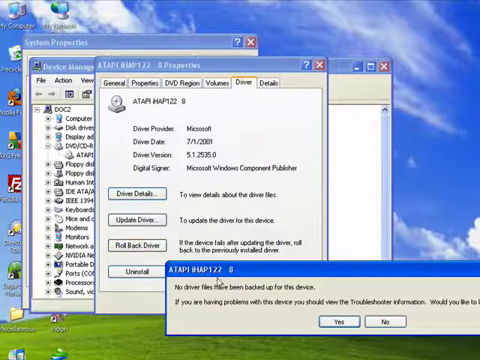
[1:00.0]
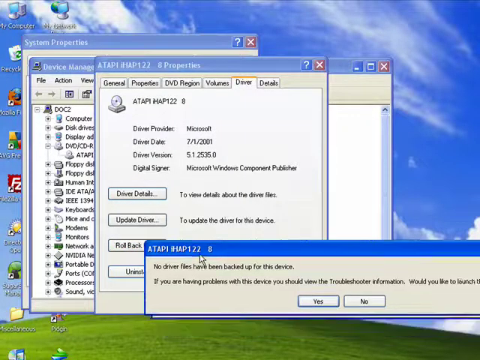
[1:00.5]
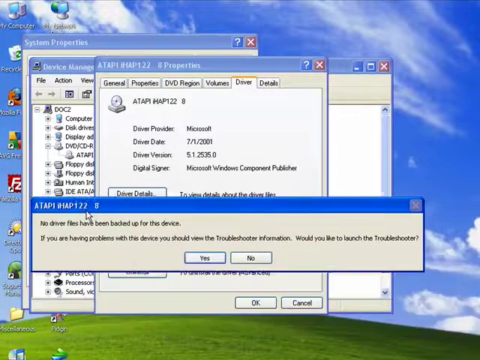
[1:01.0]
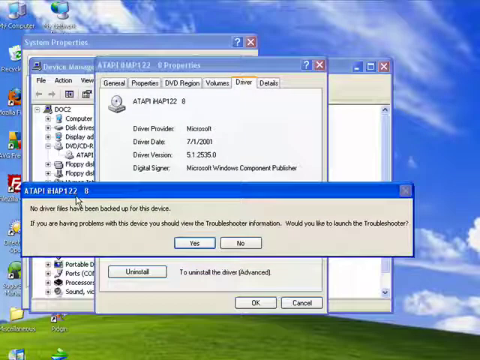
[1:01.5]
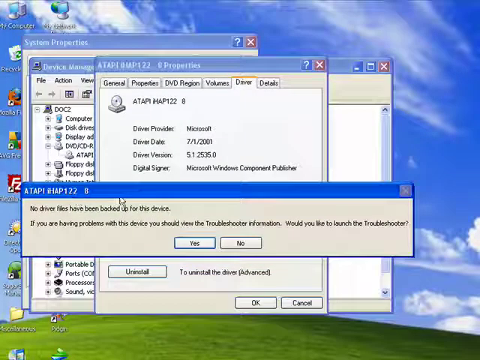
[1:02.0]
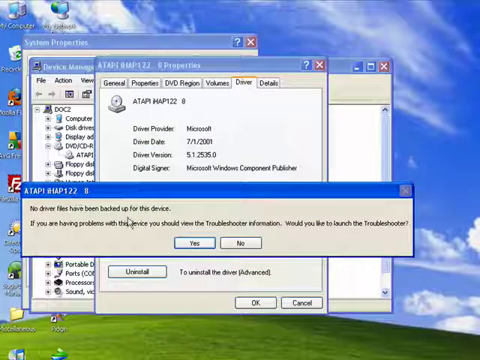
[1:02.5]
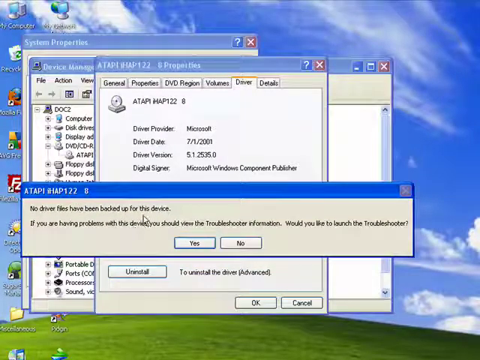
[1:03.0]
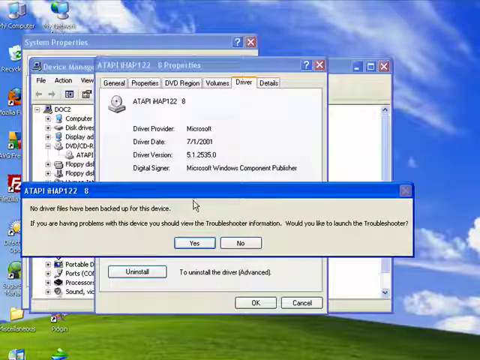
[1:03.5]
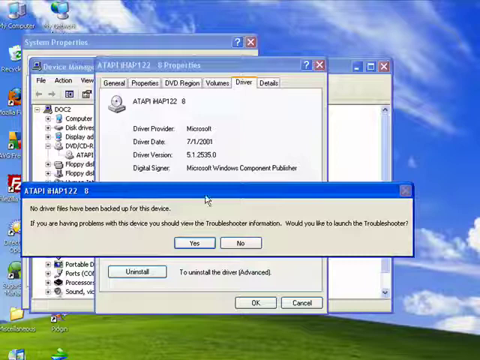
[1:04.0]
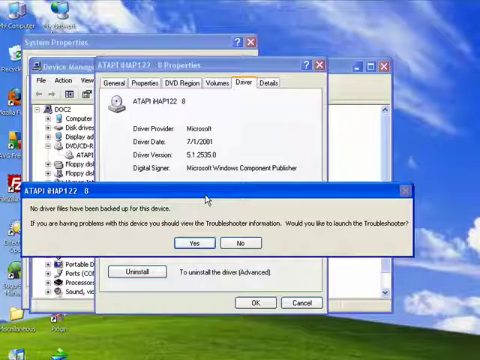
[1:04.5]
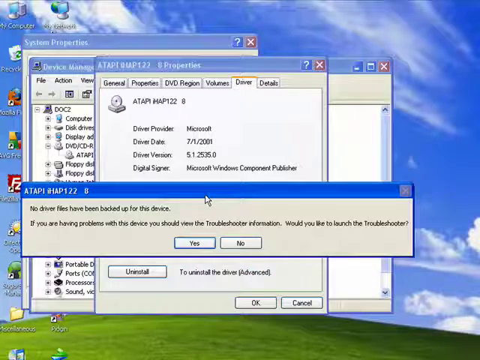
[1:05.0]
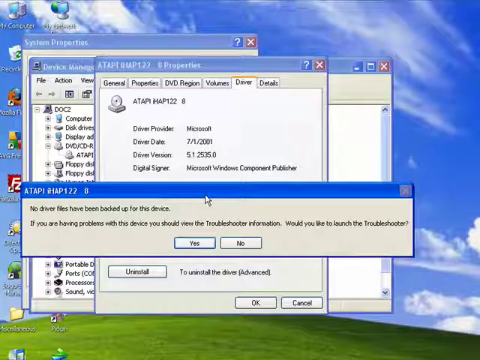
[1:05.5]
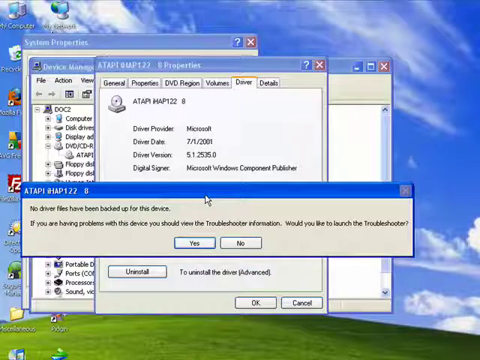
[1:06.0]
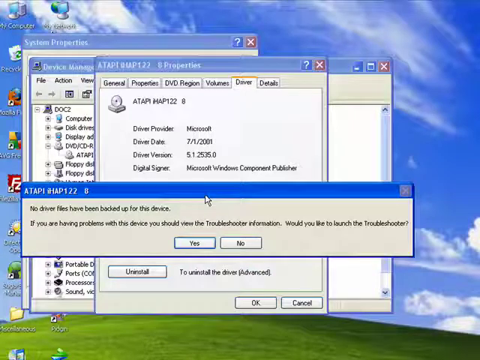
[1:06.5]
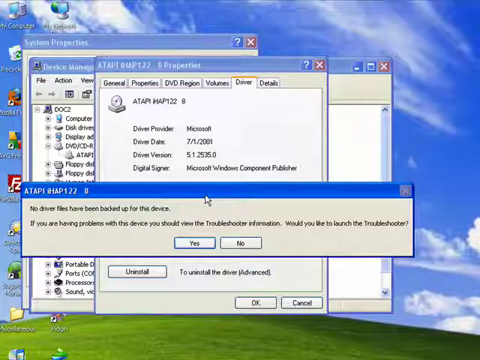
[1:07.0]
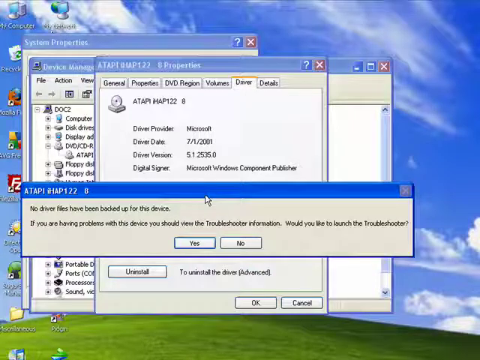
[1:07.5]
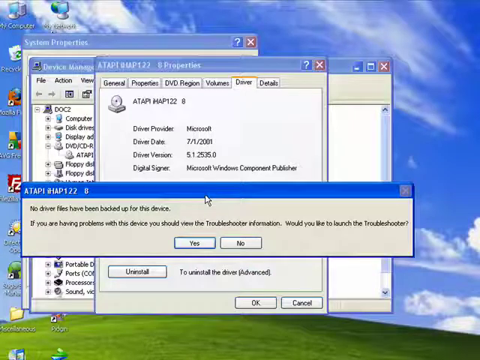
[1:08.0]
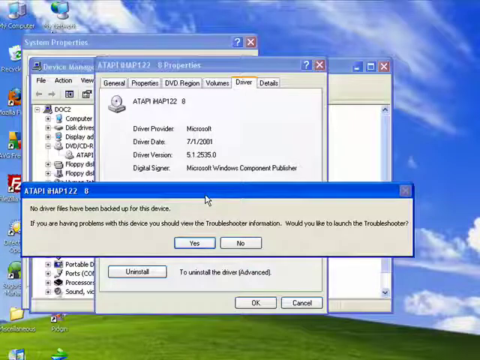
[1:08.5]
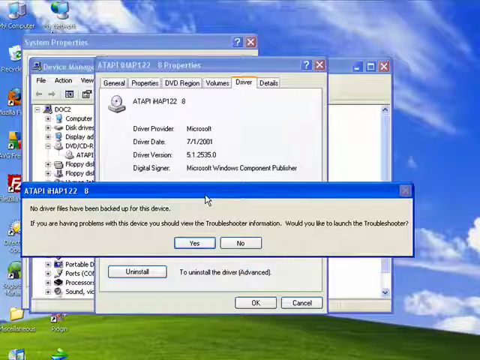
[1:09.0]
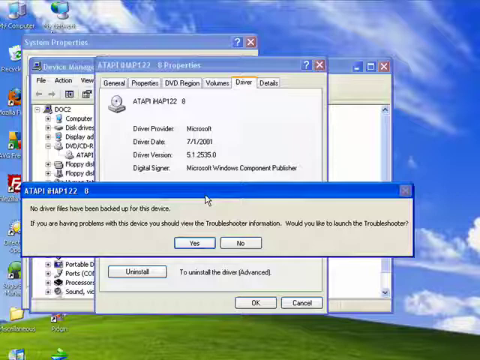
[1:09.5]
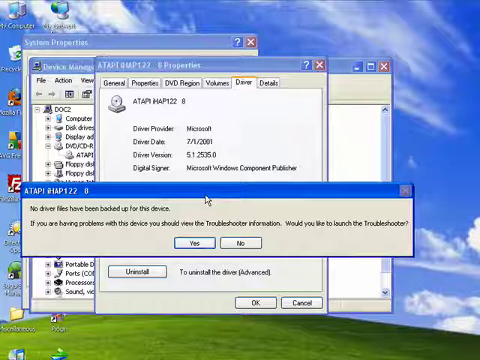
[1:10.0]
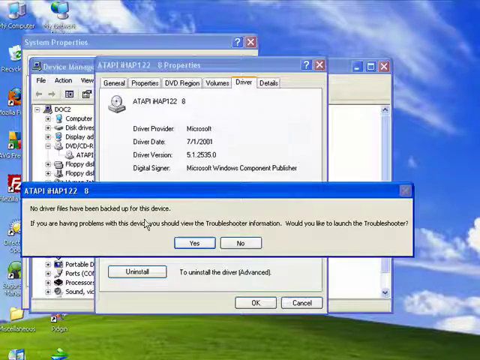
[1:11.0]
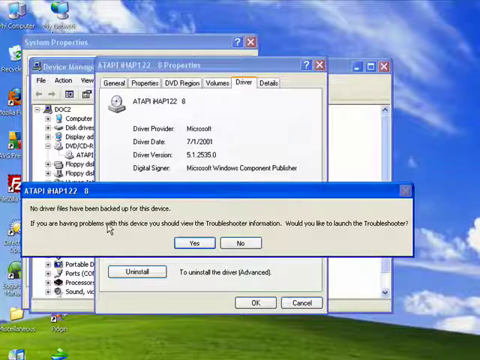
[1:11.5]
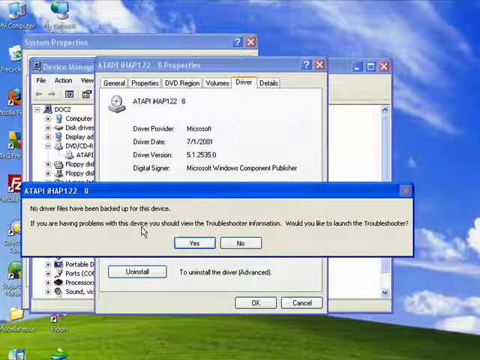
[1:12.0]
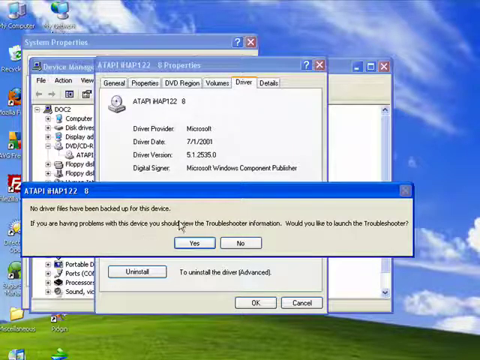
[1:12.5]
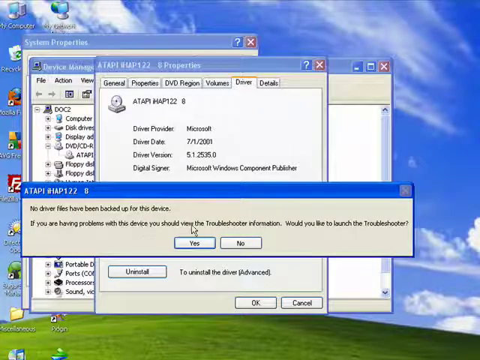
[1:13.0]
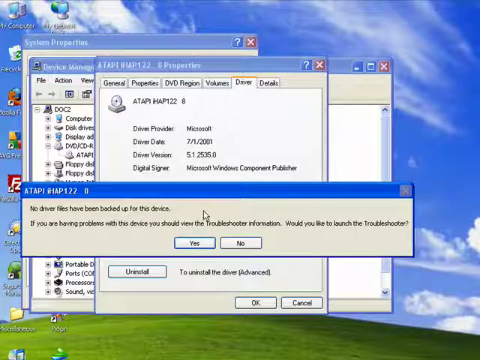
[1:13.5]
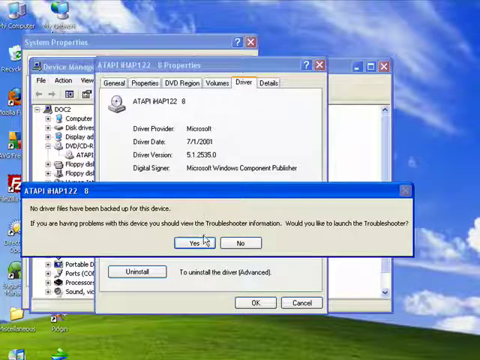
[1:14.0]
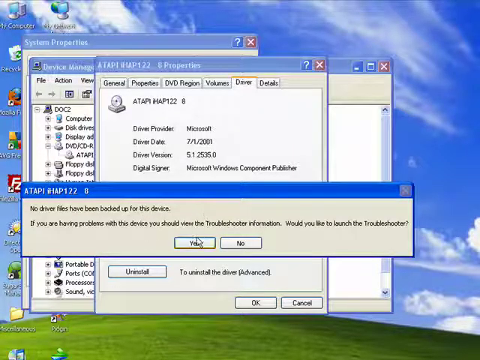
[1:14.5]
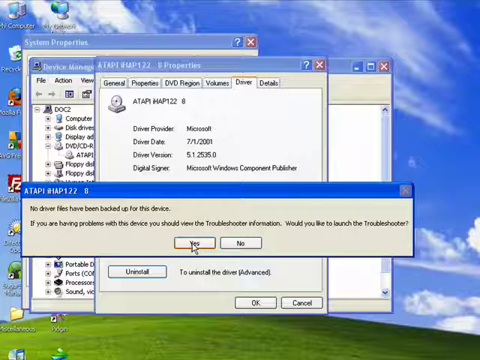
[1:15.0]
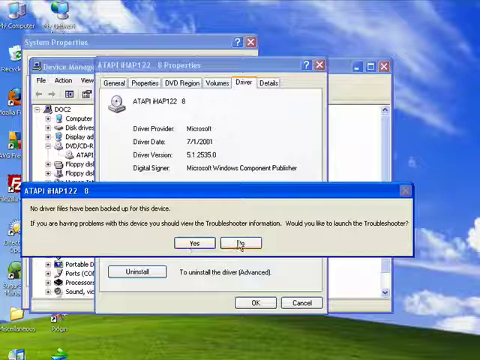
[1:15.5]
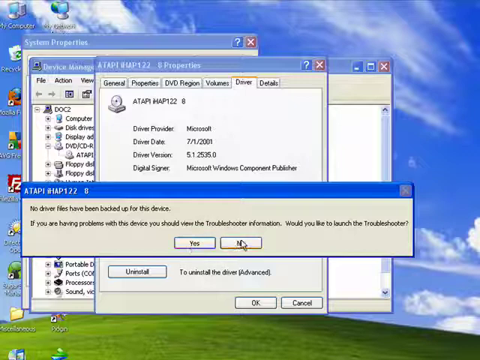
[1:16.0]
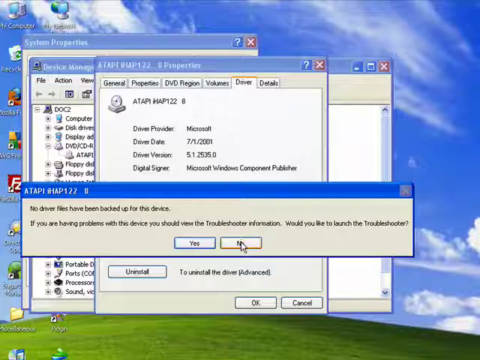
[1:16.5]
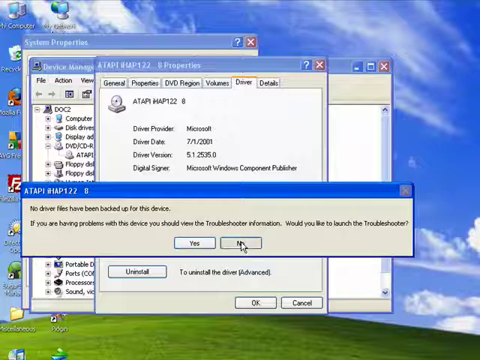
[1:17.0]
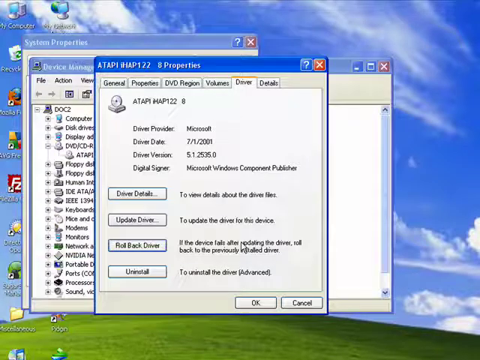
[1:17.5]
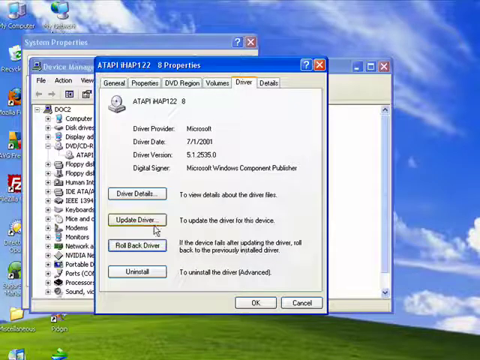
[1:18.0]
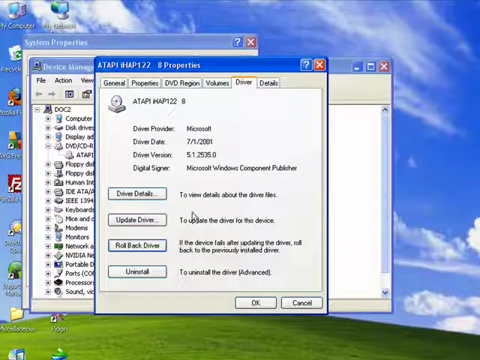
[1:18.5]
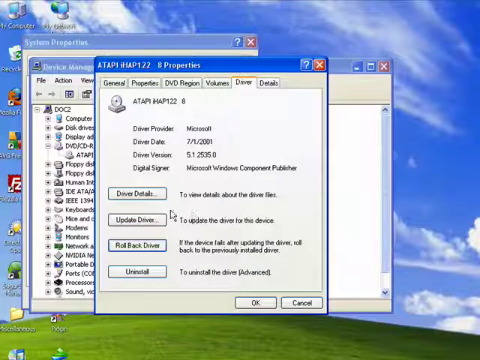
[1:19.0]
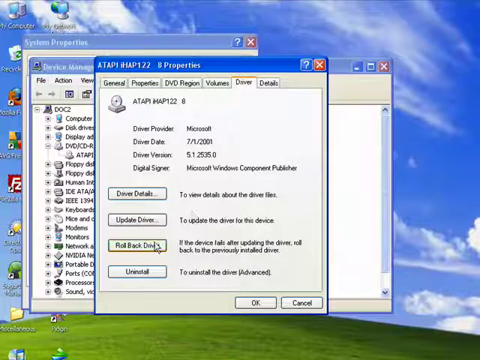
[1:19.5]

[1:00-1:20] The tutorial on rolling back a device driver starts on the standard Windows home screen. My Computer is right-clicked, Properties is opened, and the DVD/CD-ROM item is clicked, showing the driver of that device underneath. Clicking it brings up the Atapi device driver menu with the choices Driver Details, Update Driver, Roll Back Driver and Uninstall Driver. Roll Back Driver is selected, and a warning screen appears stating that driver files "have been backed up on this device. If you are having problems with the device," followed by a line on what to check if there is an issue with the driver. The small pop-up is moved to the center of the screen, and No is clicked.